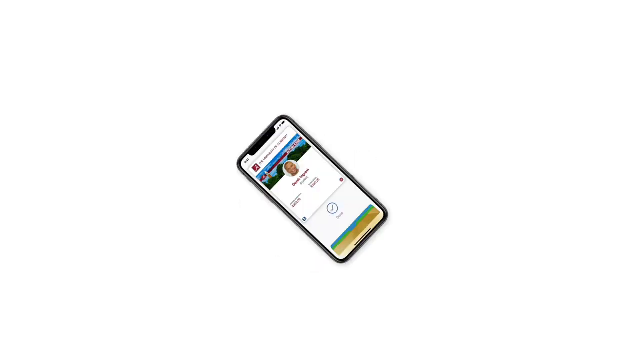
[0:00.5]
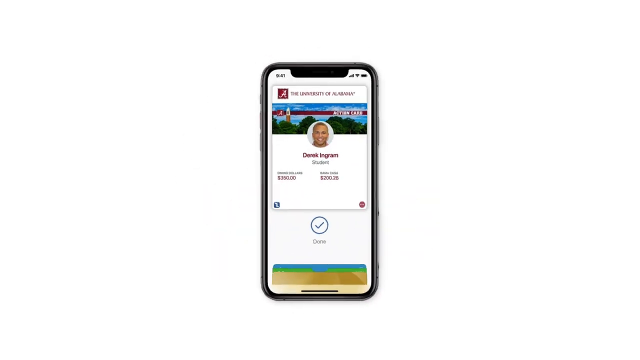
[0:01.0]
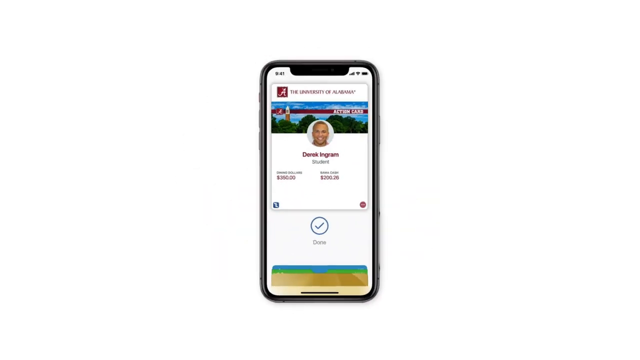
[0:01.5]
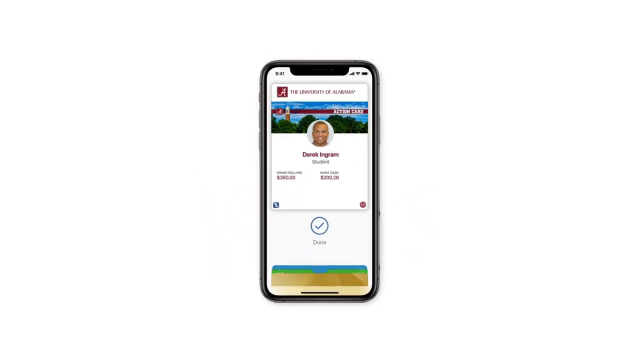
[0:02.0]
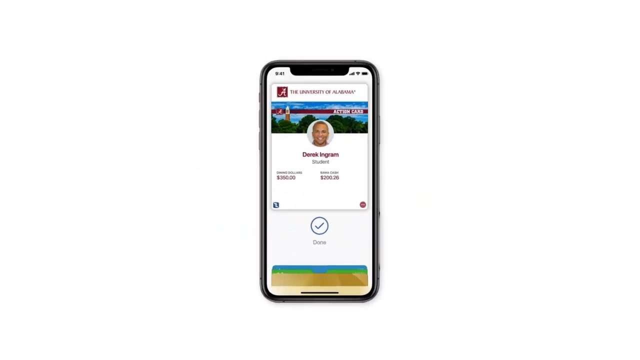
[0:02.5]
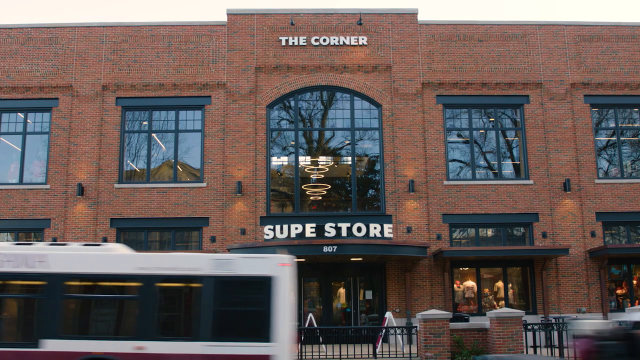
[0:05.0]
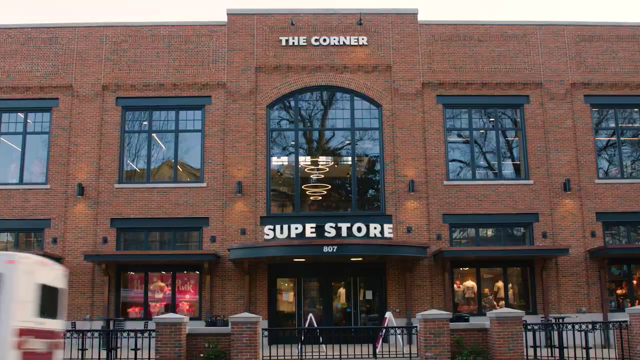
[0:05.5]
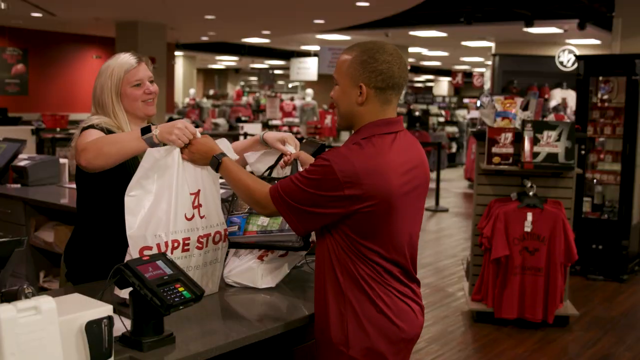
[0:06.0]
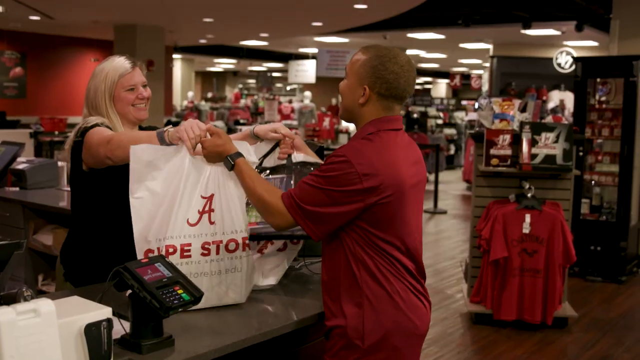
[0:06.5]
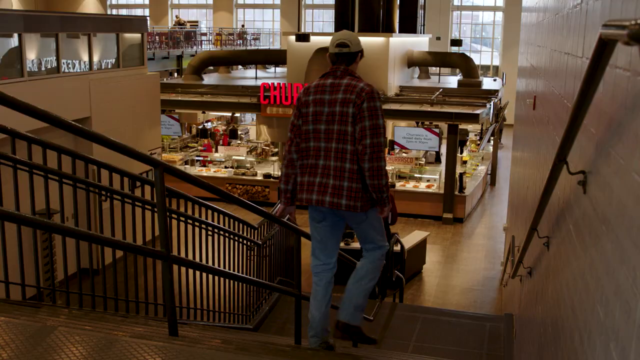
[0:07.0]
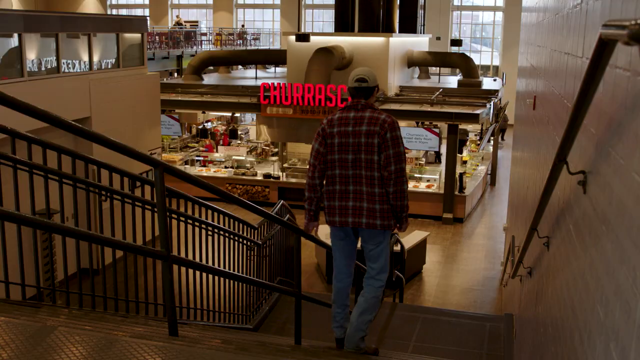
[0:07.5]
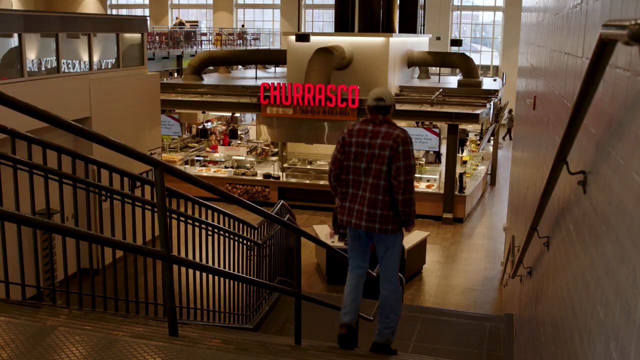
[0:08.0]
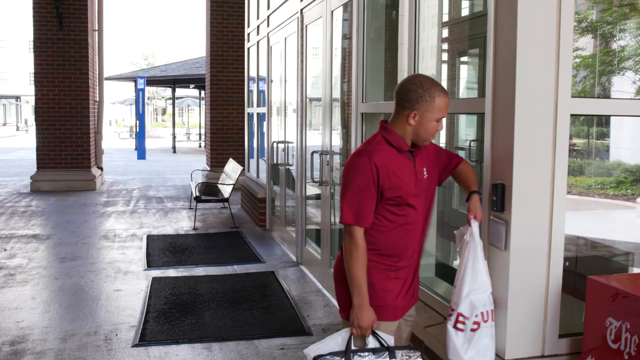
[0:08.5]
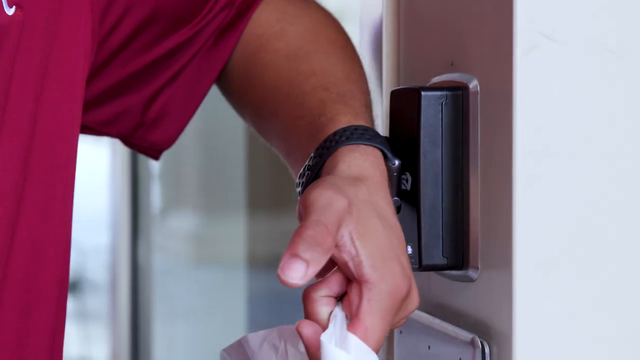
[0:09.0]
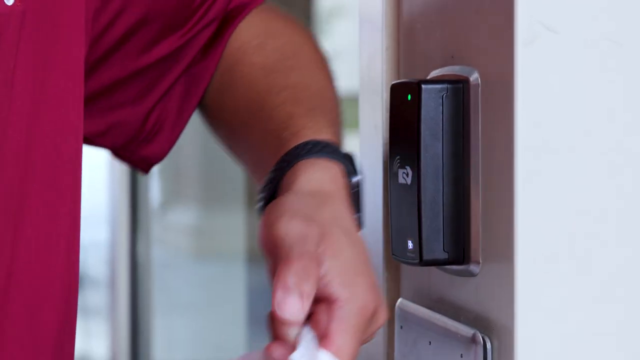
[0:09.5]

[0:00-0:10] A person connects their smartwatch, possibly an Apple Watch, to a sensor that is apparently used to allow access to an entrance door. The sensor, the app and the store are shown. The inside of the store is busy, like a shopping place, and the outside suggests lots of space.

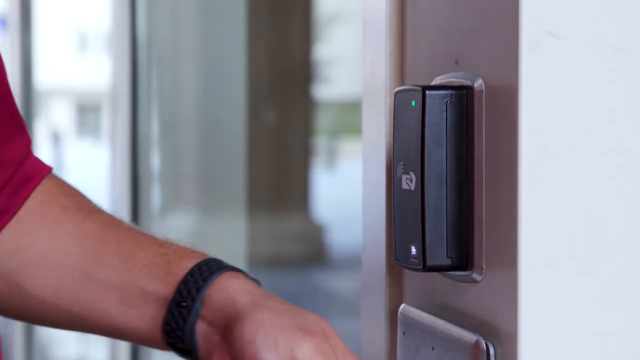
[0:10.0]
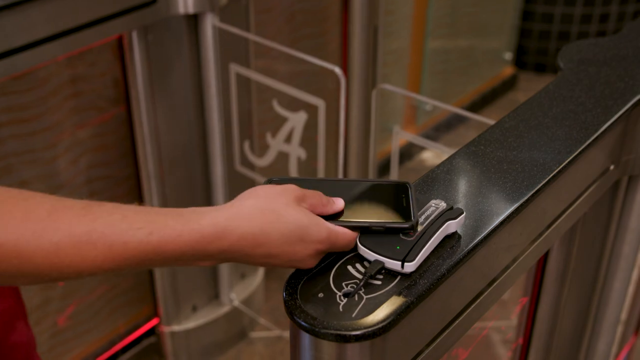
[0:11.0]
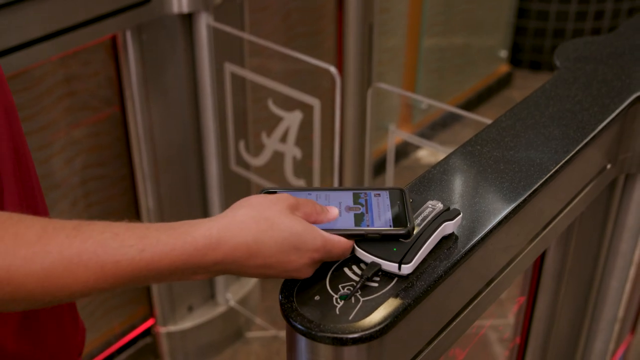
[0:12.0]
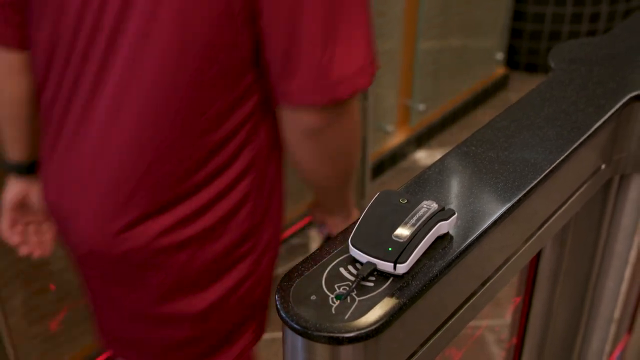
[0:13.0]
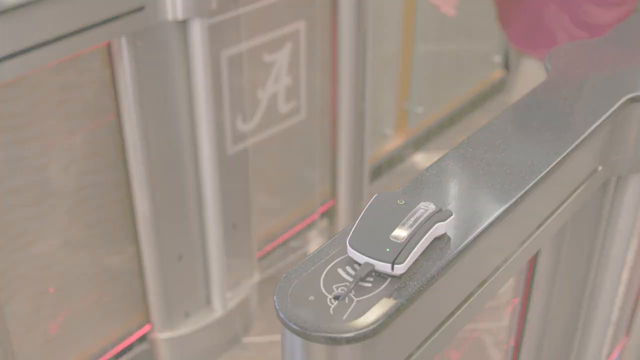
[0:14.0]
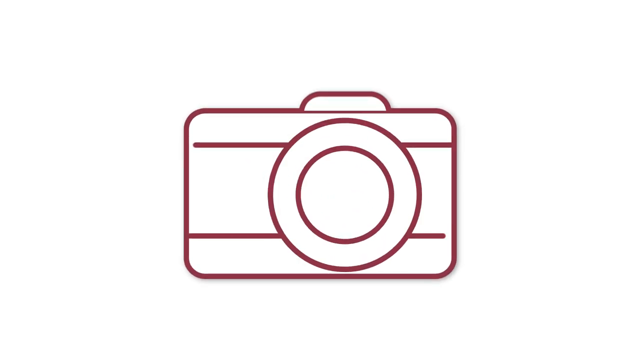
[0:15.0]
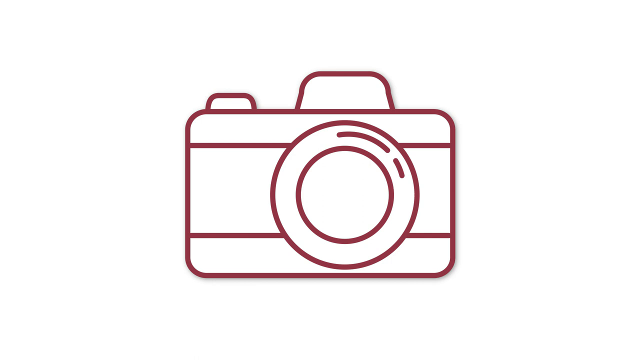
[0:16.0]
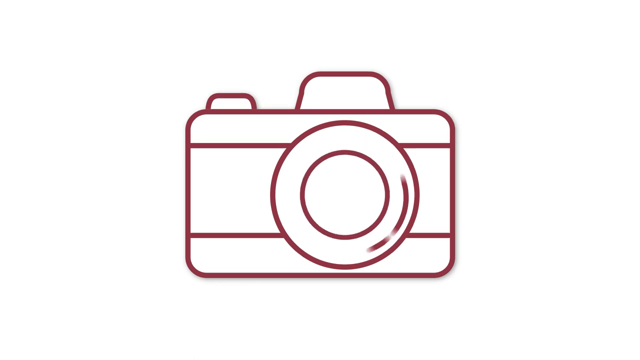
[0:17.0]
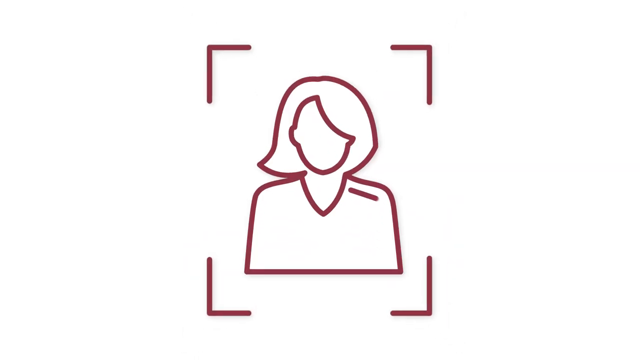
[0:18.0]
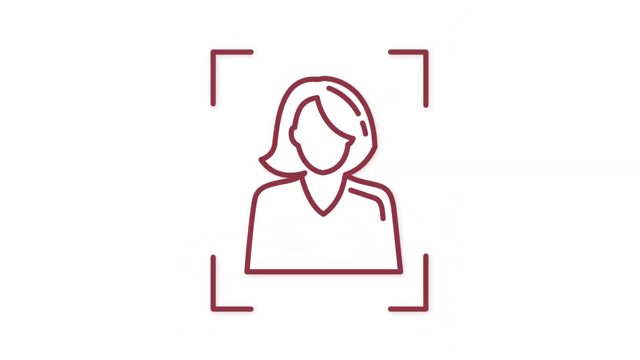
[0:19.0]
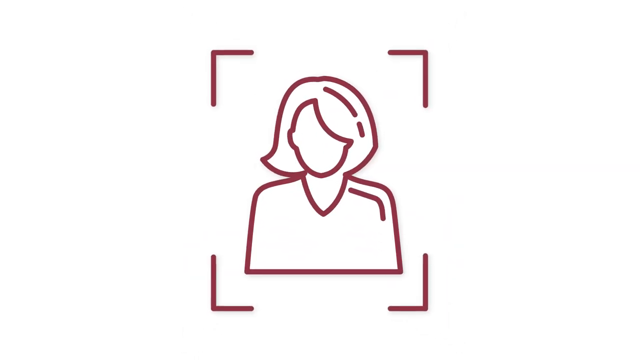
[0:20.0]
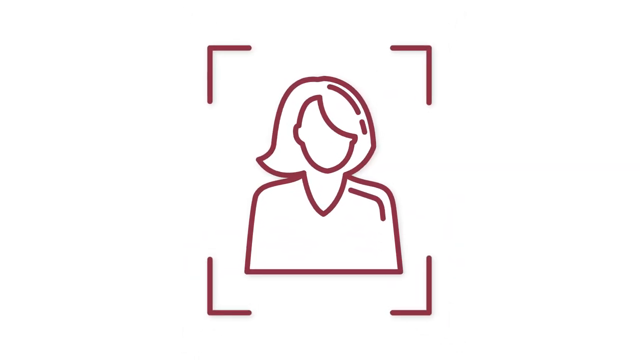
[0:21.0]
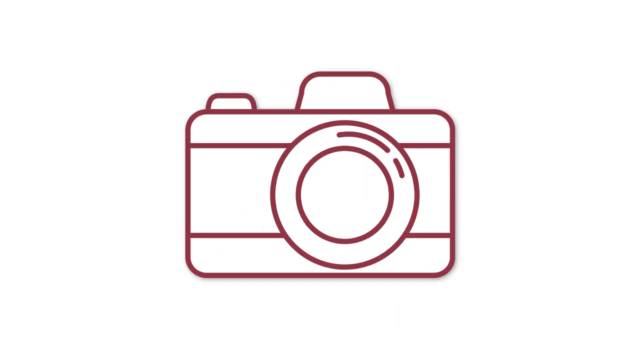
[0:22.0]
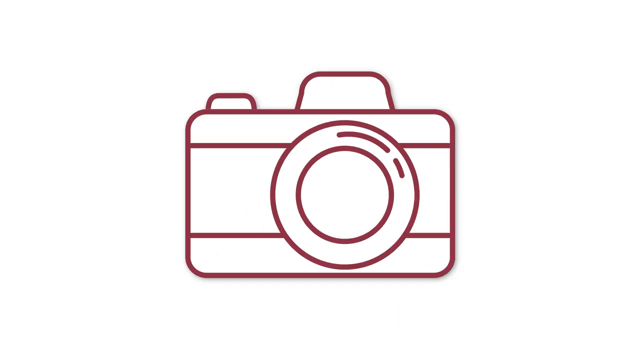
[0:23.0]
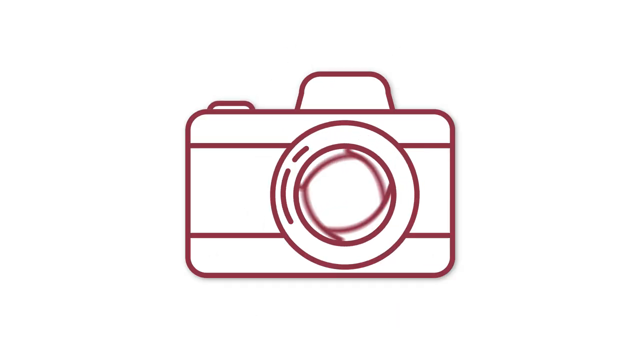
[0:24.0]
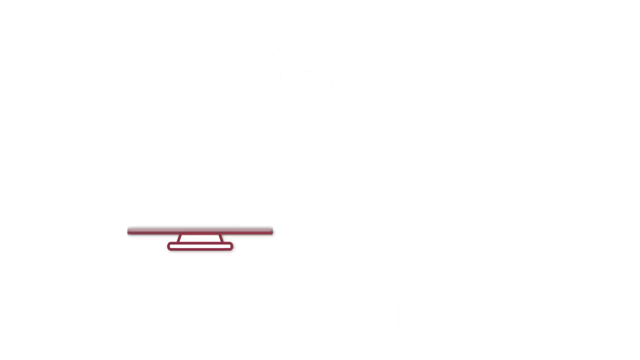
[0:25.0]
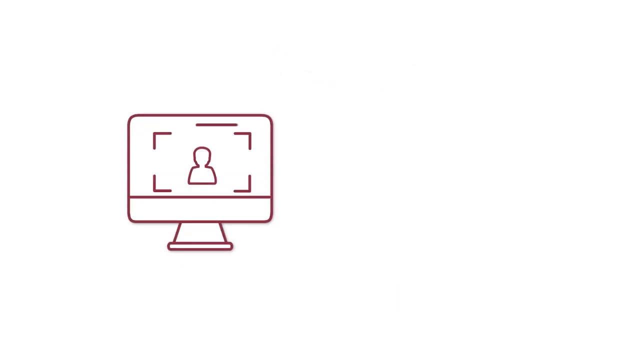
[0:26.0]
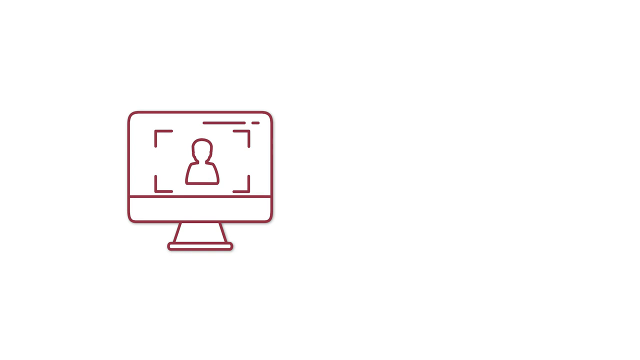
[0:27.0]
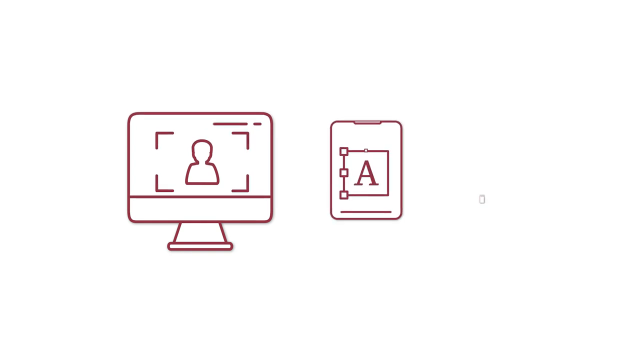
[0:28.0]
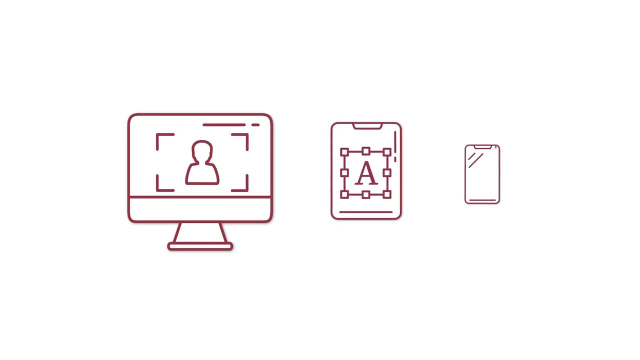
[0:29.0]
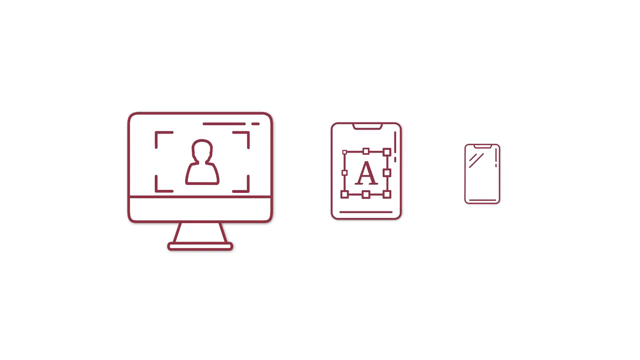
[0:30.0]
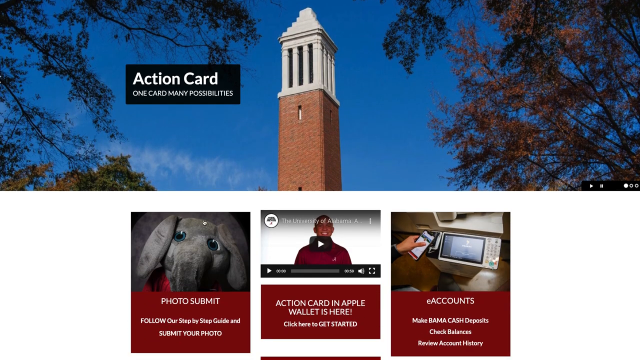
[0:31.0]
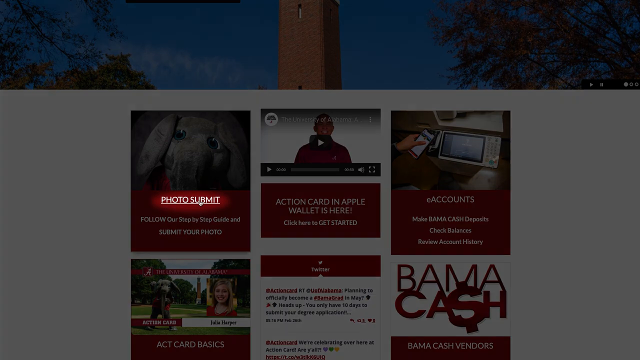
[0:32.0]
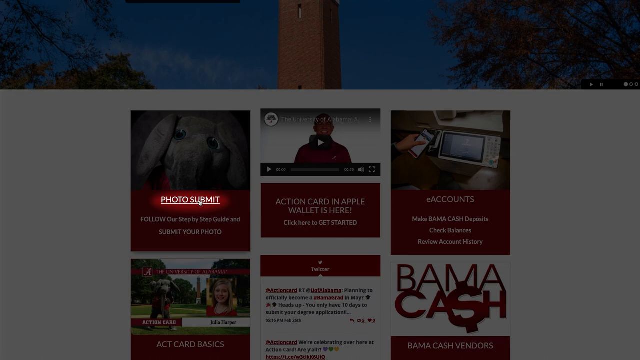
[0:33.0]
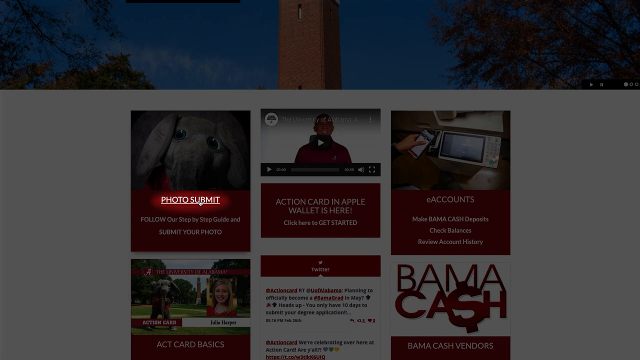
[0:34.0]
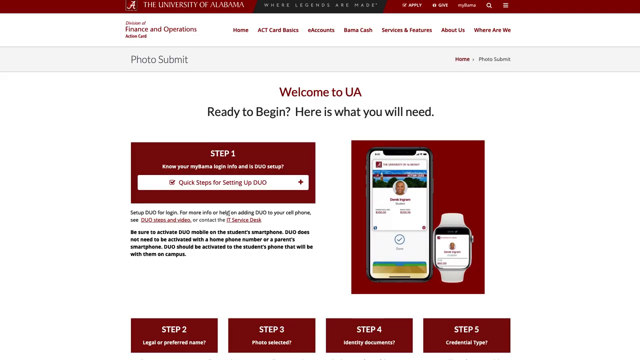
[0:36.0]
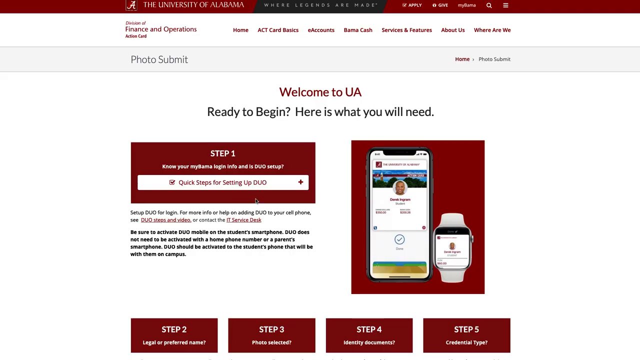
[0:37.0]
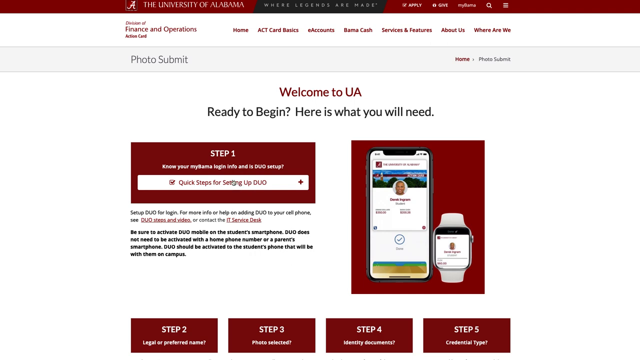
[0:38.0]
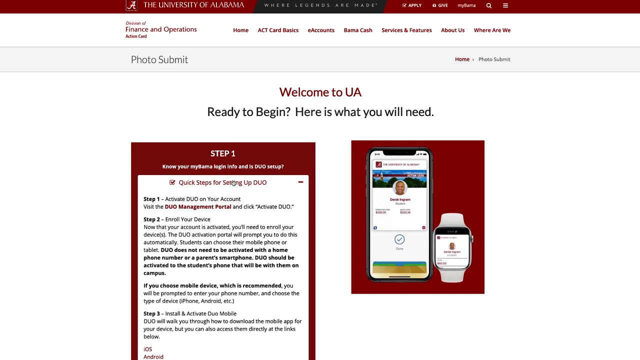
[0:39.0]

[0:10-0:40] A person accesses an entrance, swiping their mobile next to a sensor, and gains access to automated sliding doors. Icons of a camera appear across a white background, and a shutter on the camera is shown; the icons depict concepts like taking photos and identity pictures. More icons follow, of a desktop, a tablet and a mobile phone, suggesting the mediums where this can be used. The platform is then shown with a photo submit option on the mobile website, indicating where one would submit the photo. A website shows "step one, quick steps", and on the left there is a depiction of a mobile phone and a smartwatch.